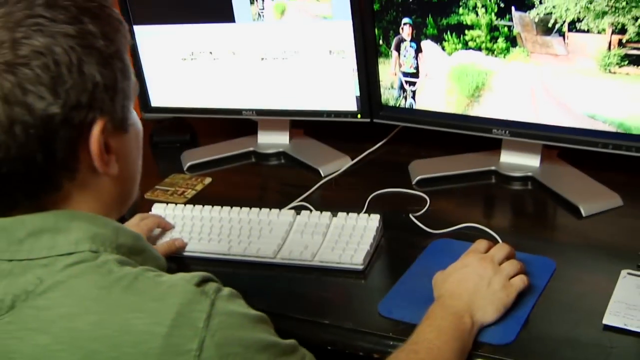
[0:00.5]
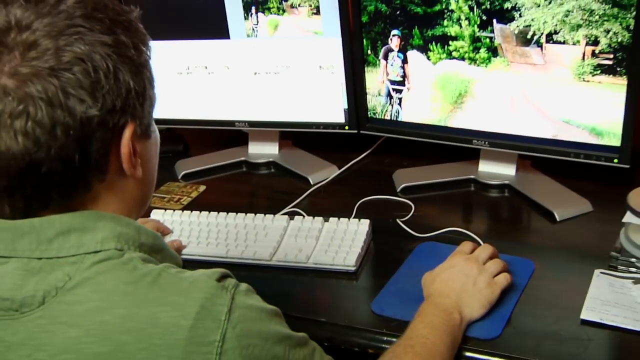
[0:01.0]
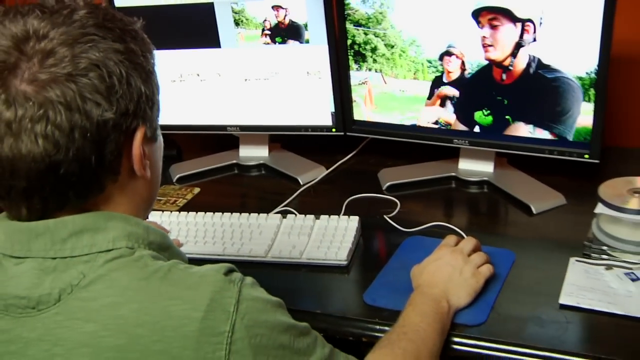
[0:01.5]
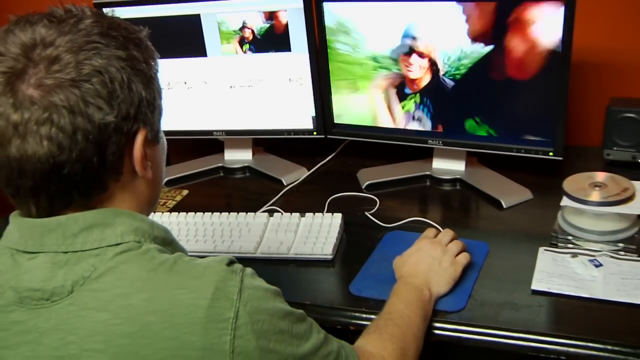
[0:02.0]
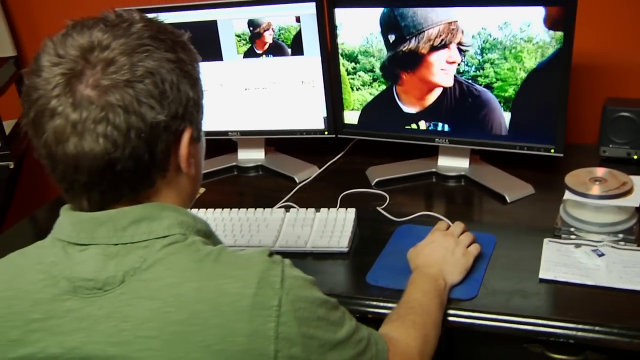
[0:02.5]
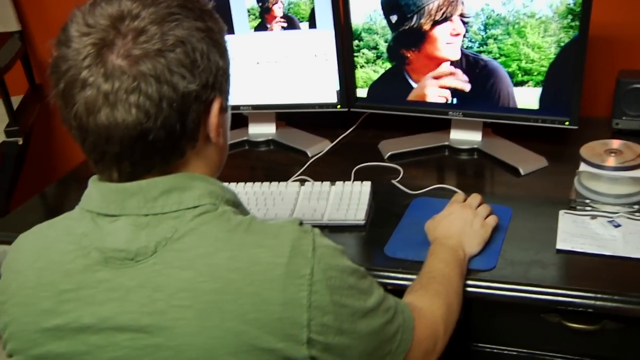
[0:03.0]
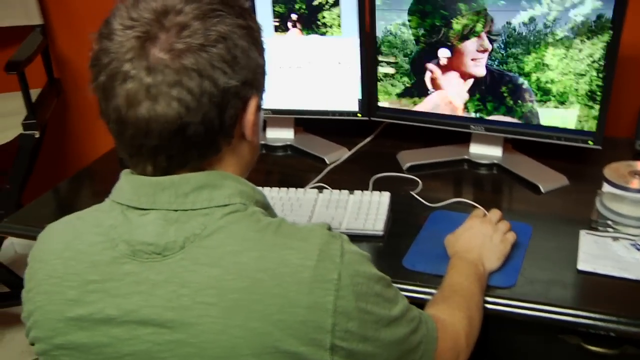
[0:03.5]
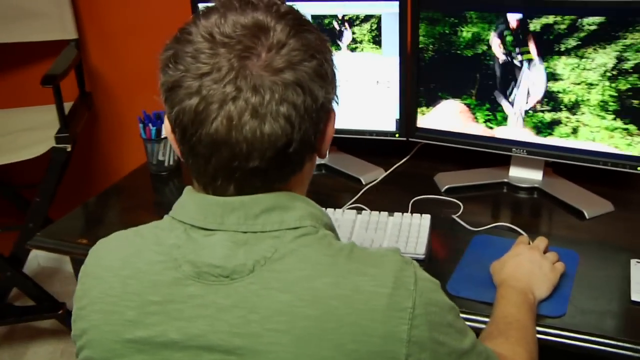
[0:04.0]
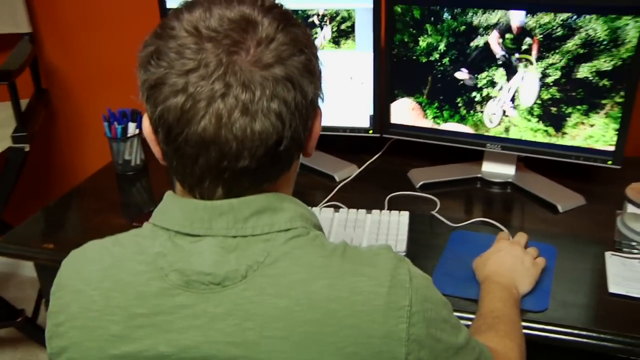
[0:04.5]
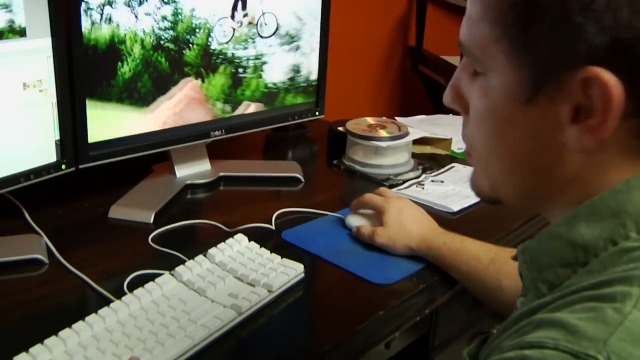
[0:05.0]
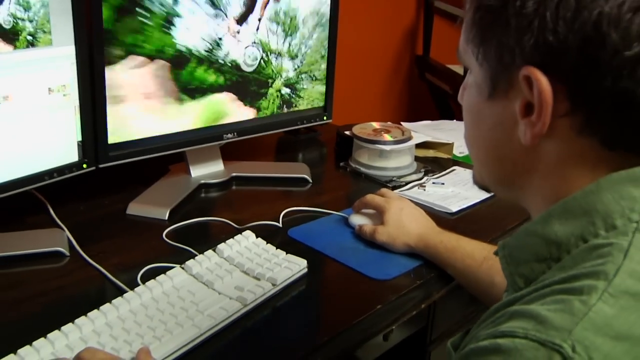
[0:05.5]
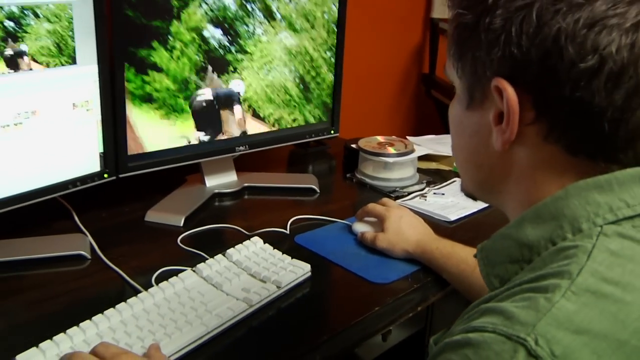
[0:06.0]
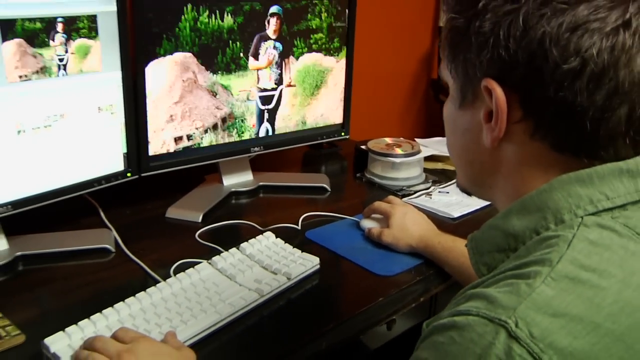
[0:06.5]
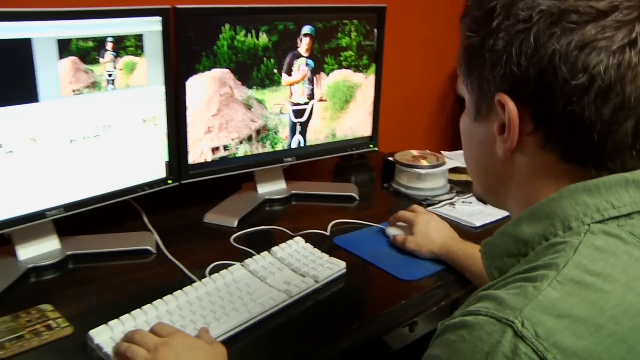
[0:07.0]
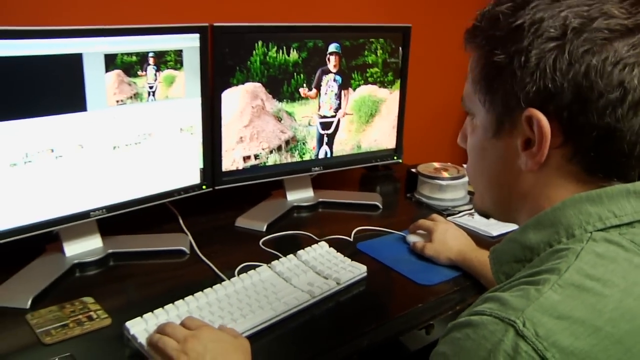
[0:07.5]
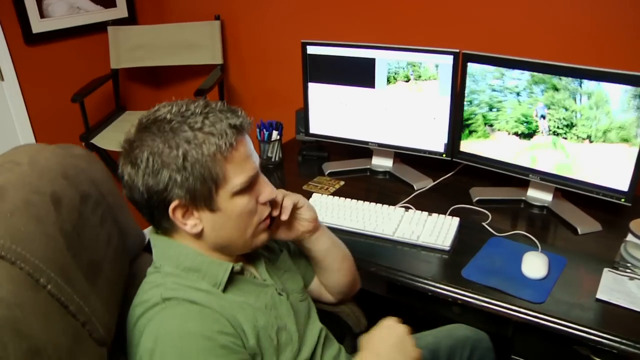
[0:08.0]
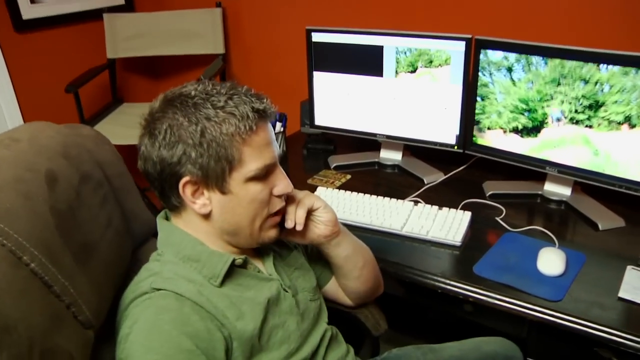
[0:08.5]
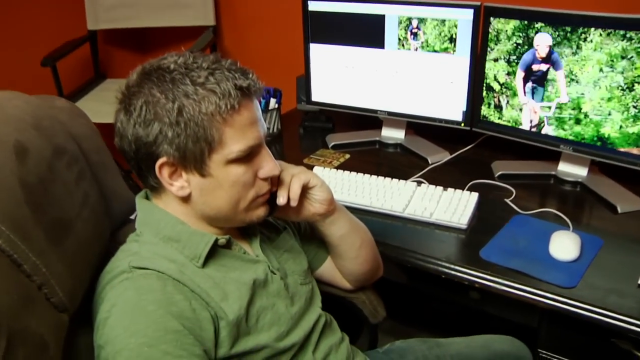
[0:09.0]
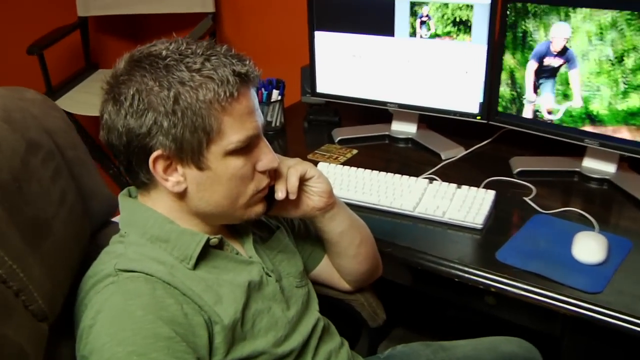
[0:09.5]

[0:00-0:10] A man in a green shirt sits at a computer with two monitors in front of him and a white keyboard in front of him as well. He uses the mouse on a blue mousepad. Some CDs lie on the desk to his right. One of the monitors shows a video of someone on a walk, riding a bike while wearing a helmet and doing tricks. He moves his chair to talk to the camera. He has short brown hair and appears a little older.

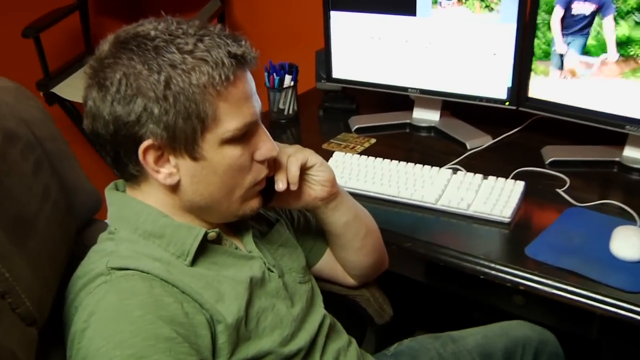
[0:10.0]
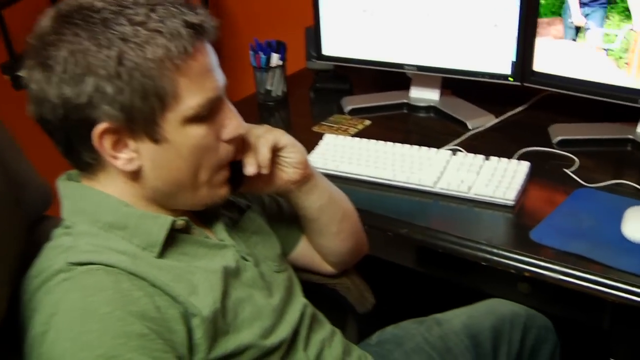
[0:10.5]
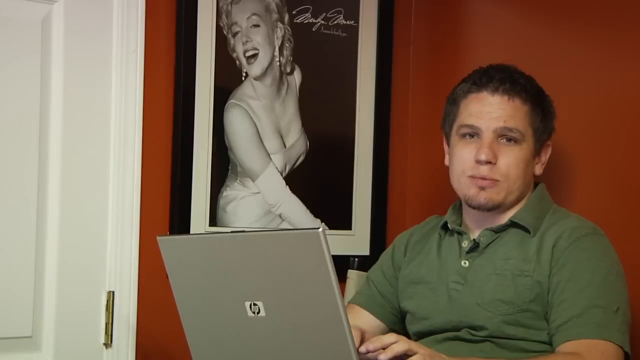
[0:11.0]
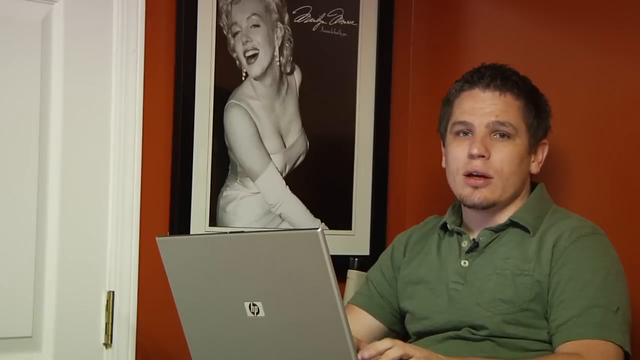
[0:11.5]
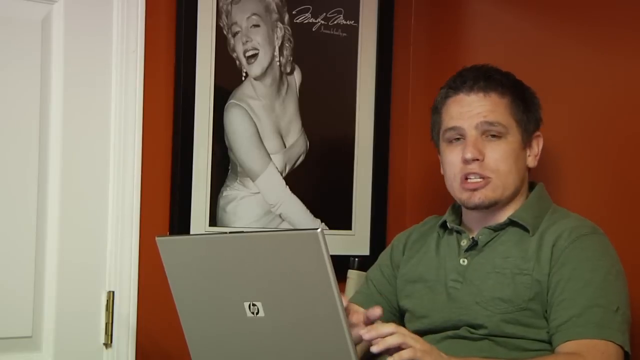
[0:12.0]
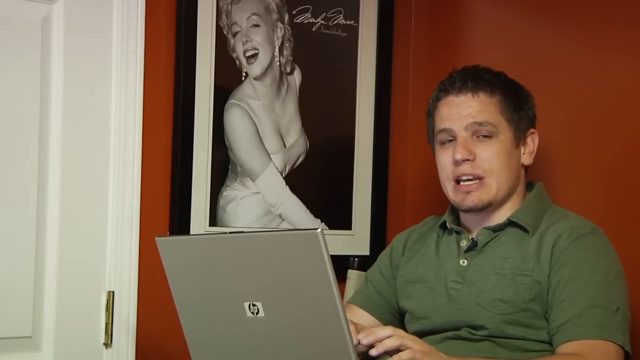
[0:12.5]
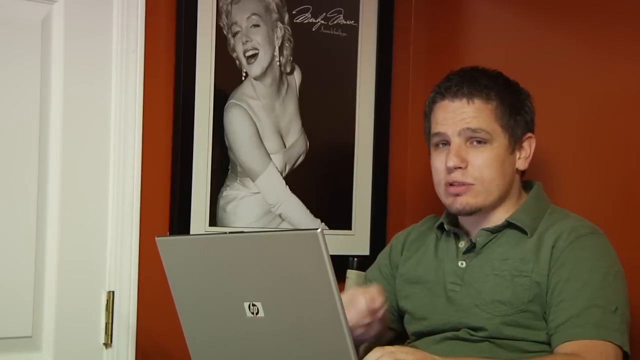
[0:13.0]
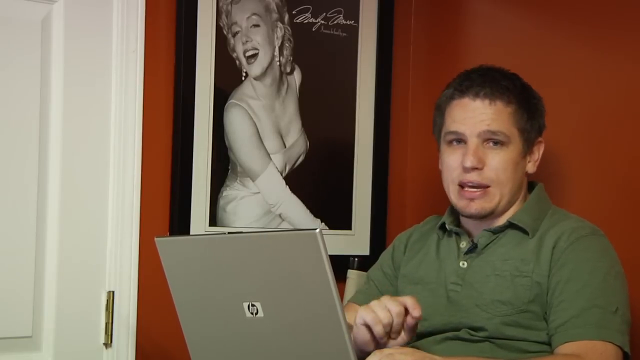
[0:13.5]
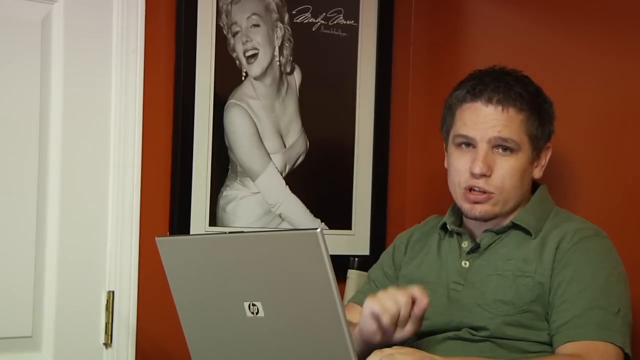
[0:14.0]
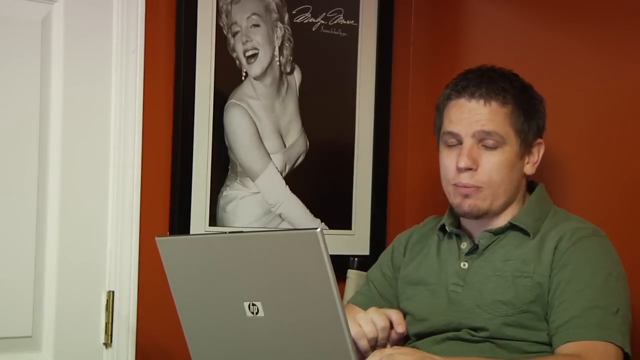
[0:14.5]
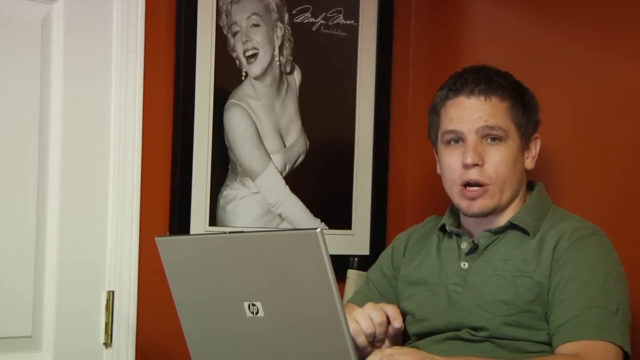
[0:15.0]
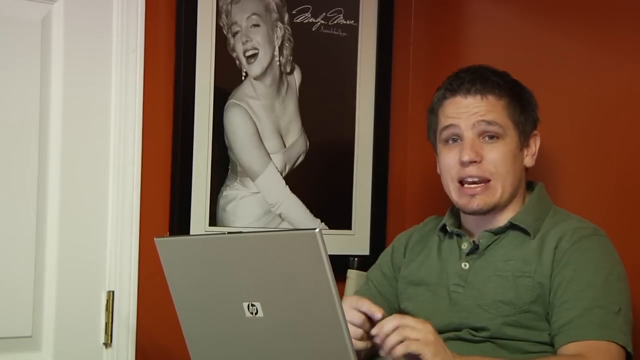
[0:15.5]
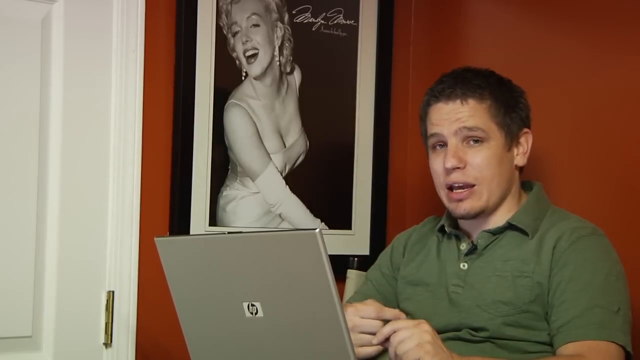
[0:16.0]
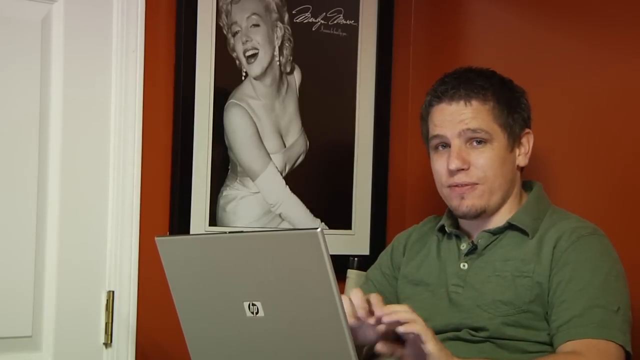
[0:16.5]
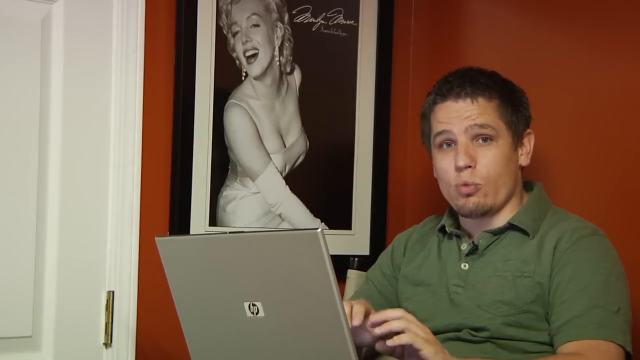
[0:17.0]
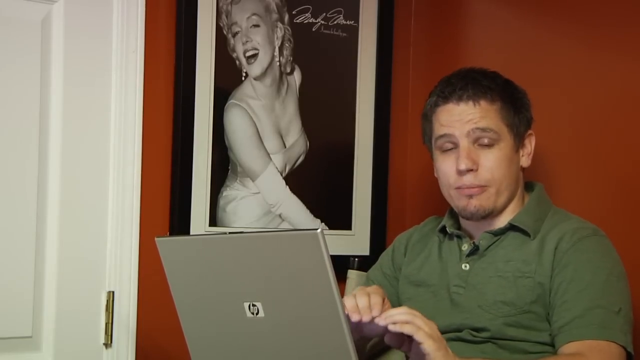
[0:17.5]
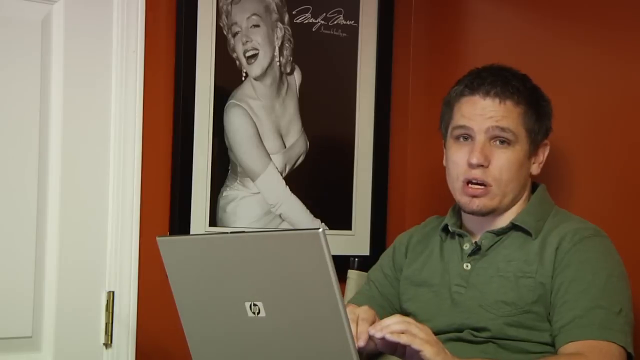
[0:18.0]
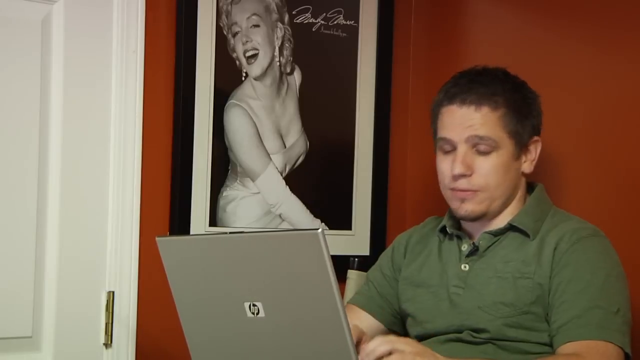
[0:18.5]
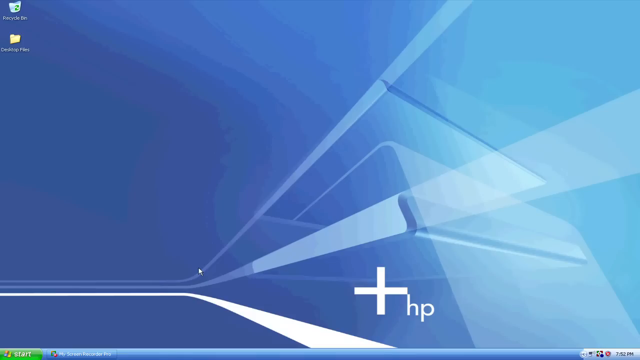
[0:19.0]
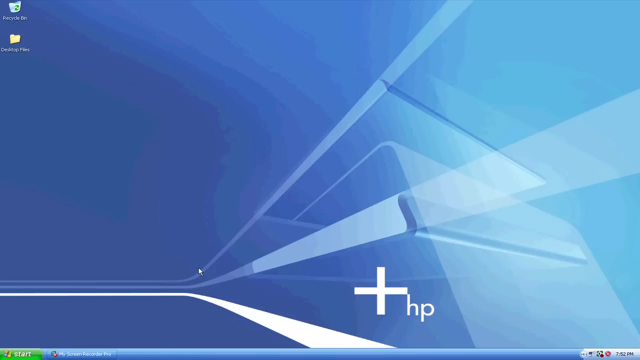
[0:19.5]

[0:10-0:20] The man who was using the computer has moved his chair to the right to speak to the camera. He speaks without looking directly at the camera while the computer stays on and the videos continue to play. The camera then cuts to him sitting in front of a red wall, using a silver computer in front of him. To his right on the wall is a picture of Marilyn Monroe that appears to be signed at the top of the image. Someone speaks directly to the camera. A white door is on the left of the image.